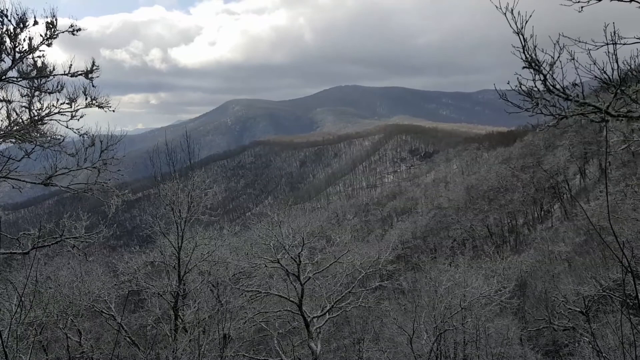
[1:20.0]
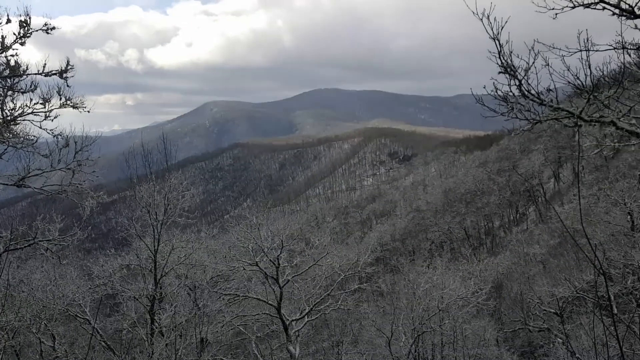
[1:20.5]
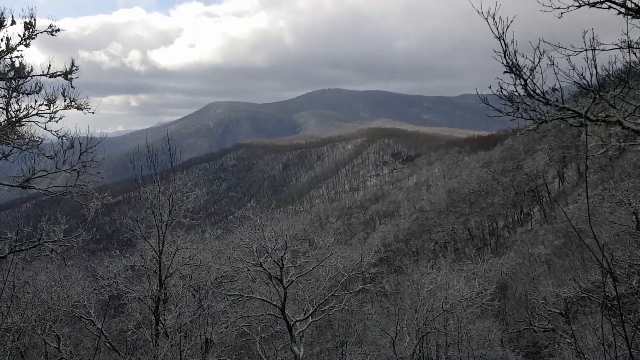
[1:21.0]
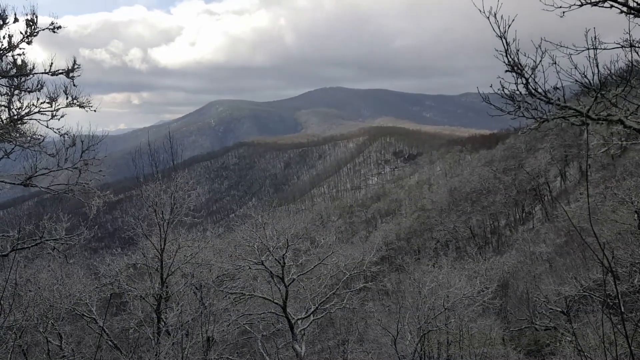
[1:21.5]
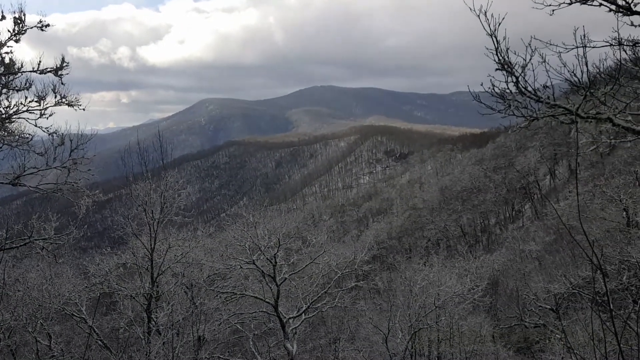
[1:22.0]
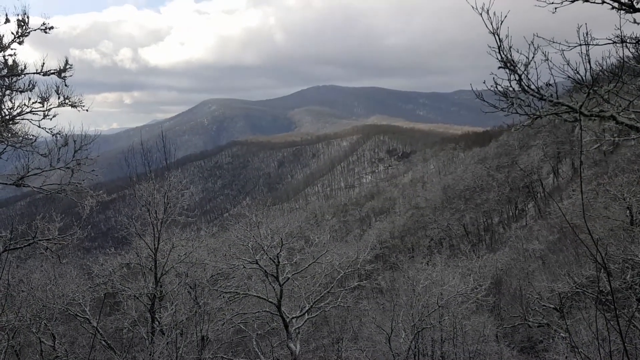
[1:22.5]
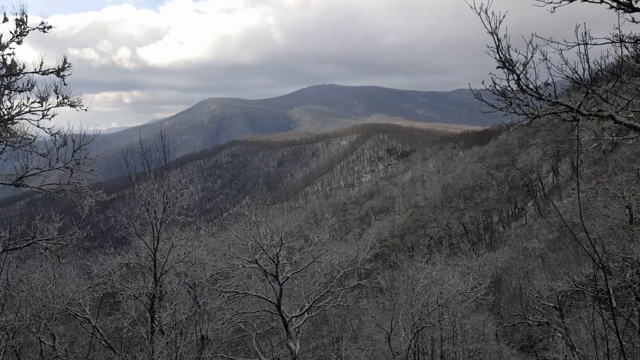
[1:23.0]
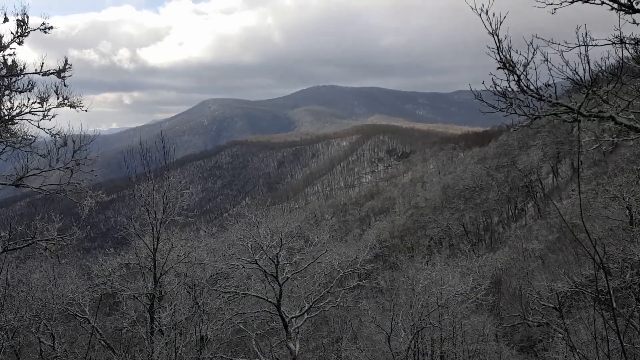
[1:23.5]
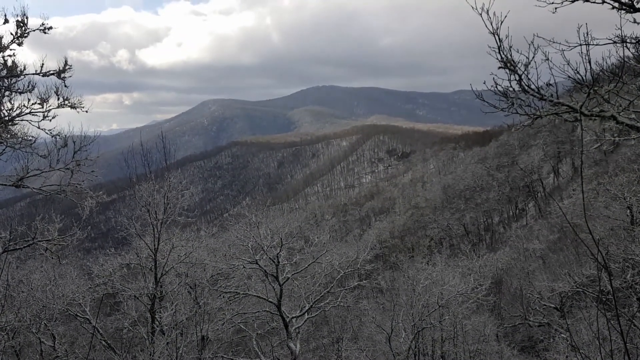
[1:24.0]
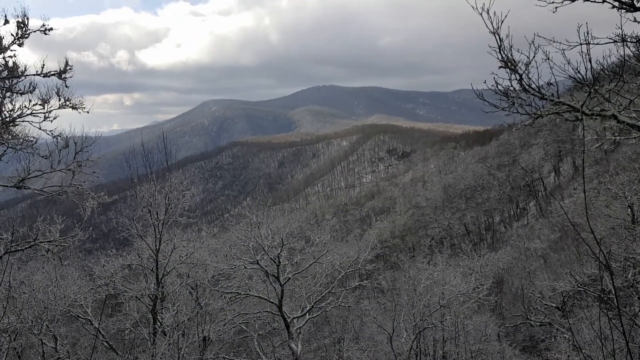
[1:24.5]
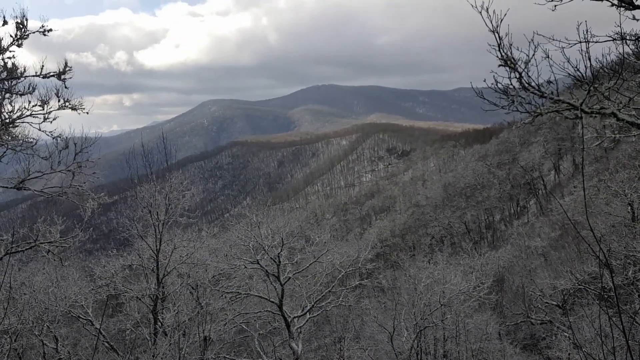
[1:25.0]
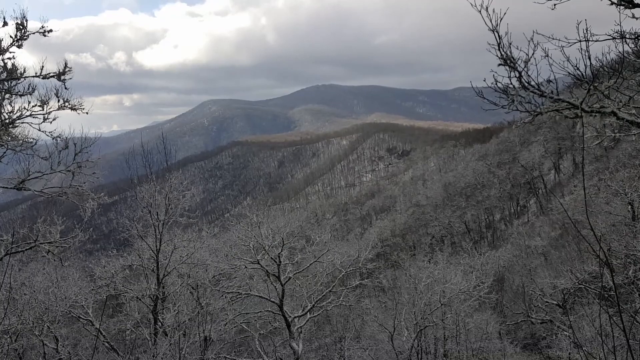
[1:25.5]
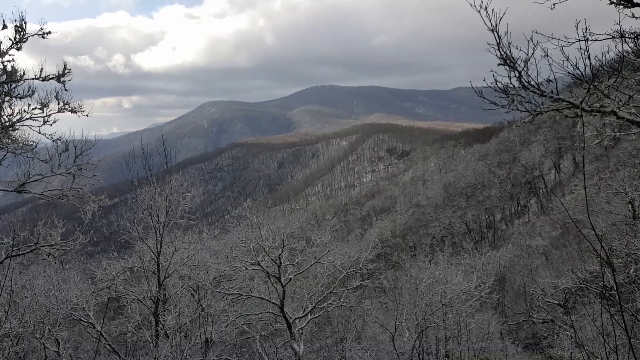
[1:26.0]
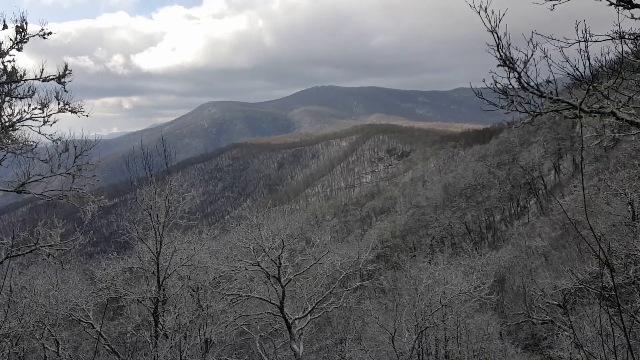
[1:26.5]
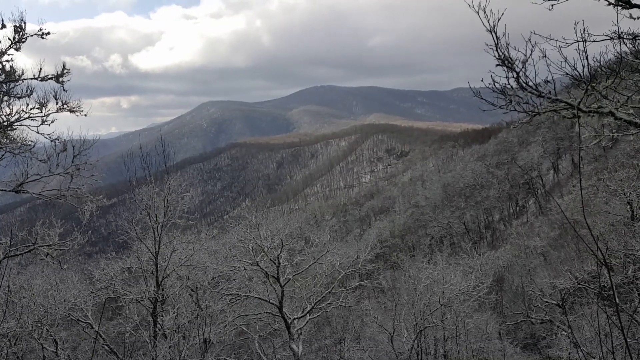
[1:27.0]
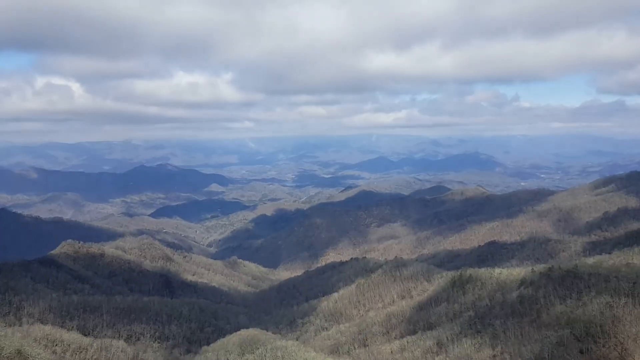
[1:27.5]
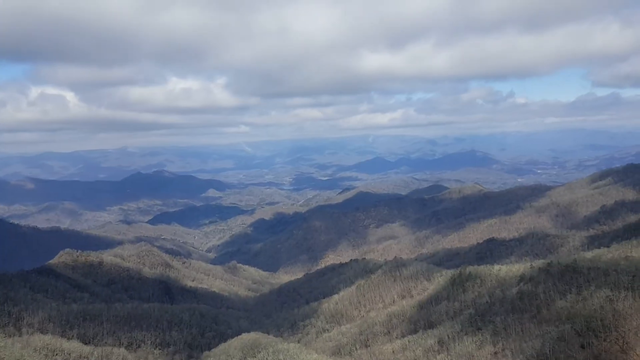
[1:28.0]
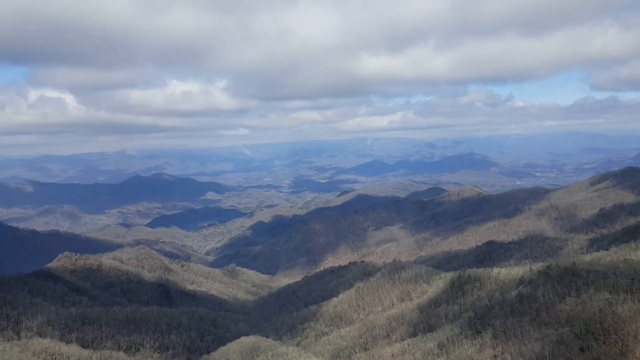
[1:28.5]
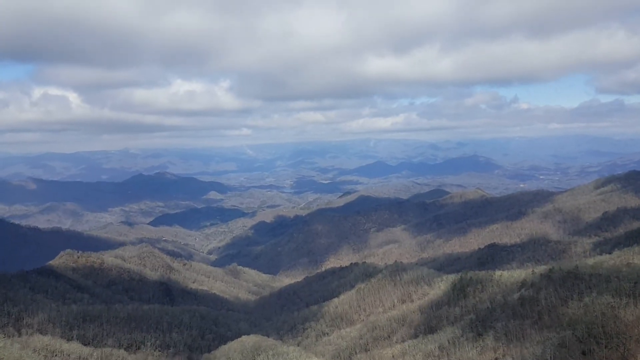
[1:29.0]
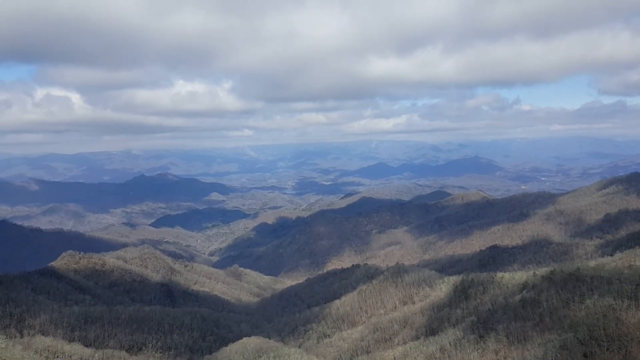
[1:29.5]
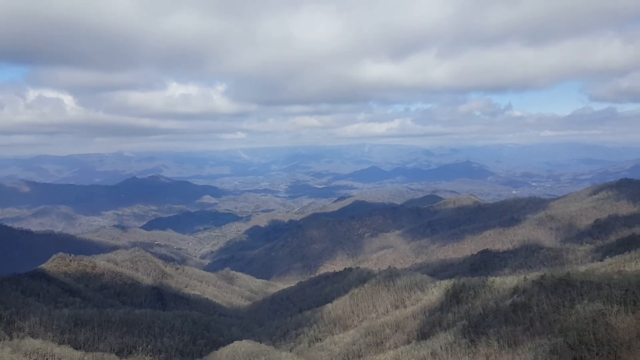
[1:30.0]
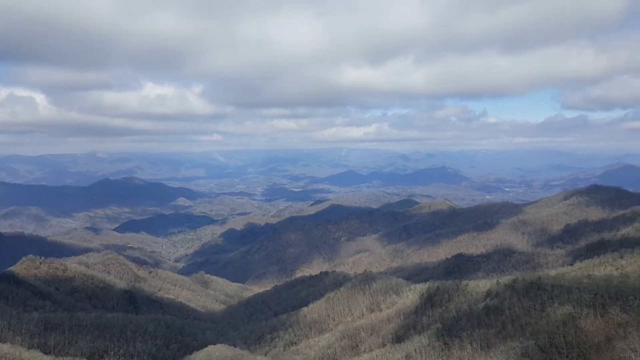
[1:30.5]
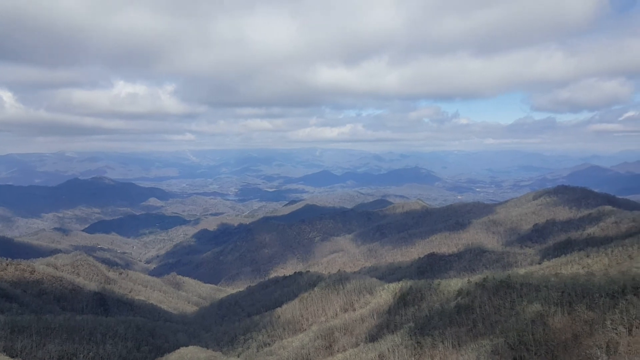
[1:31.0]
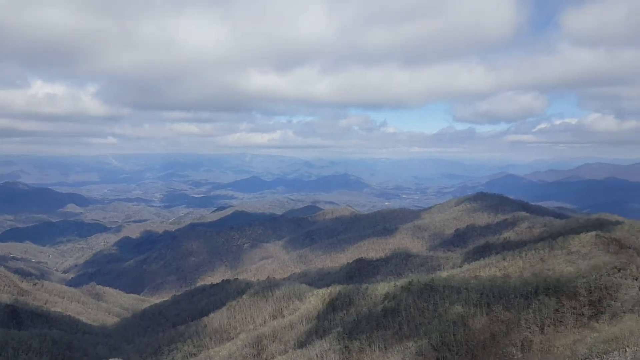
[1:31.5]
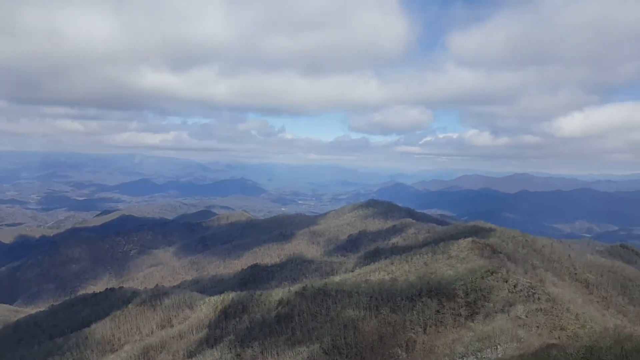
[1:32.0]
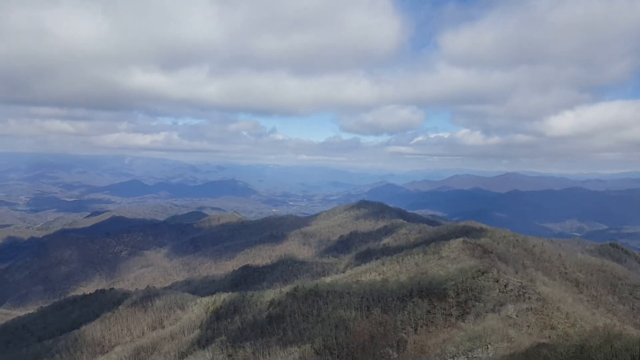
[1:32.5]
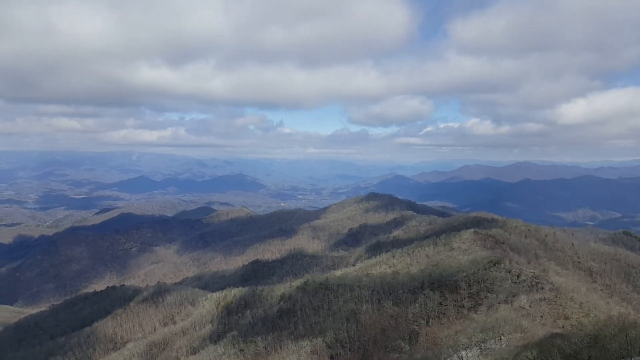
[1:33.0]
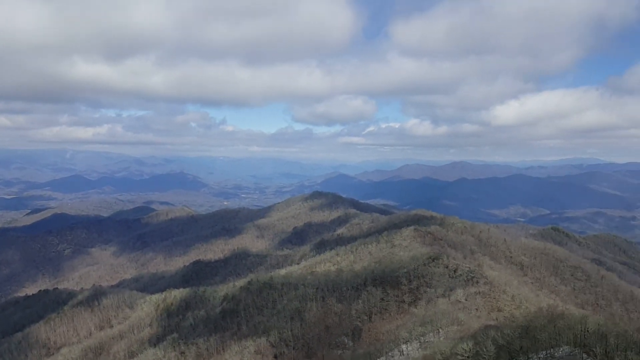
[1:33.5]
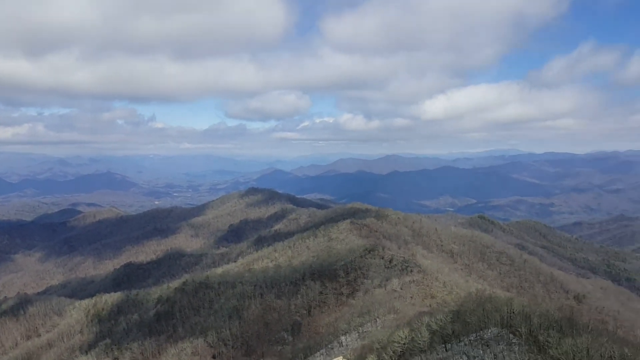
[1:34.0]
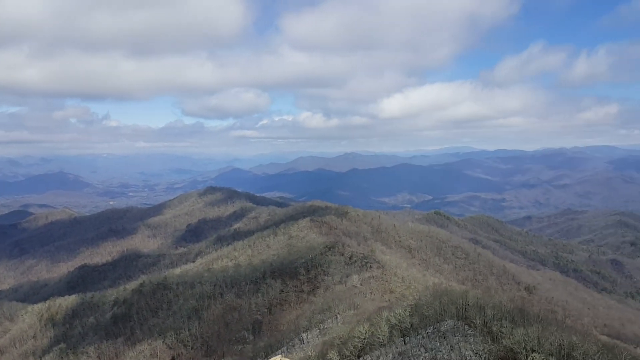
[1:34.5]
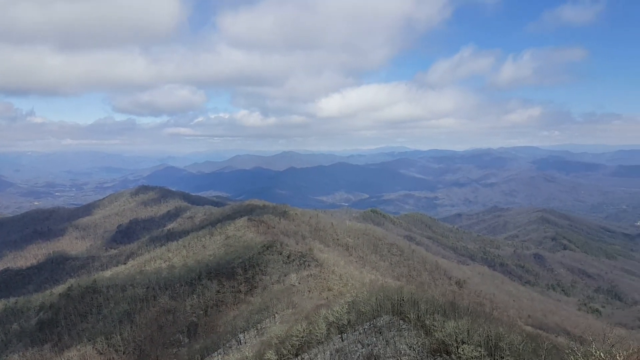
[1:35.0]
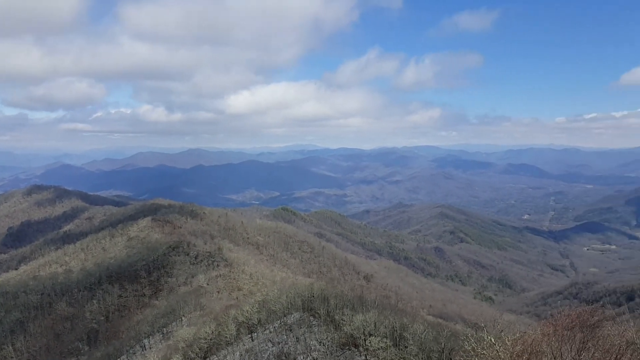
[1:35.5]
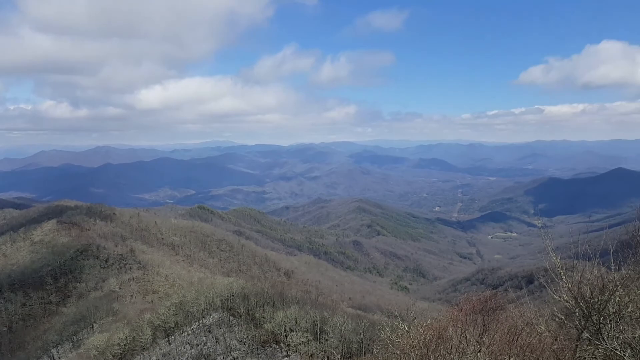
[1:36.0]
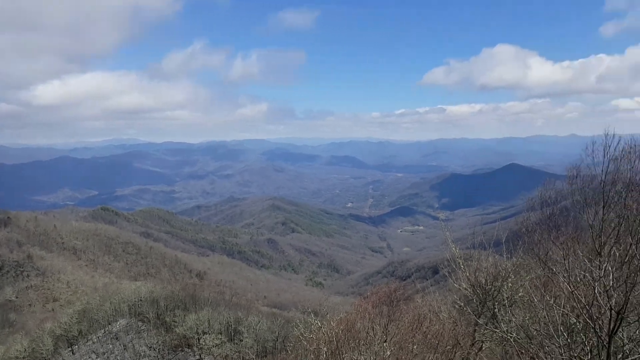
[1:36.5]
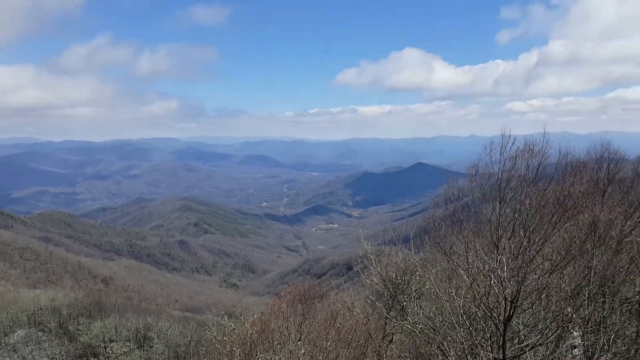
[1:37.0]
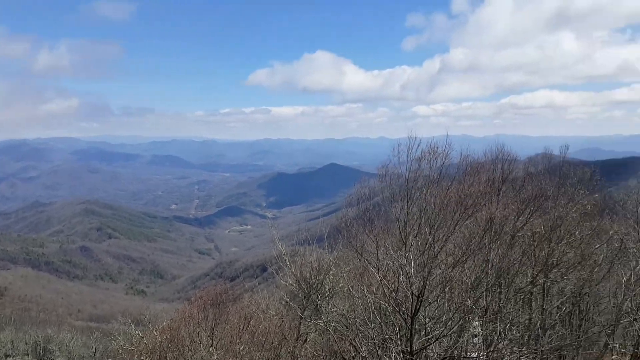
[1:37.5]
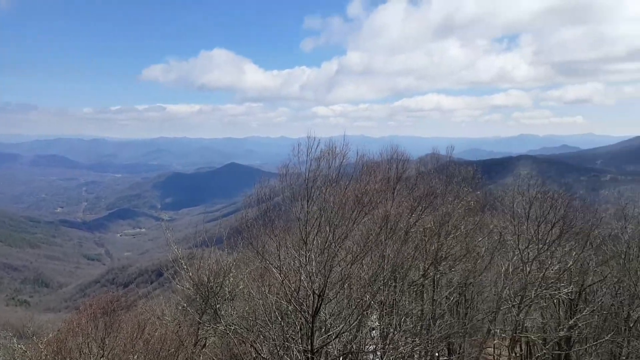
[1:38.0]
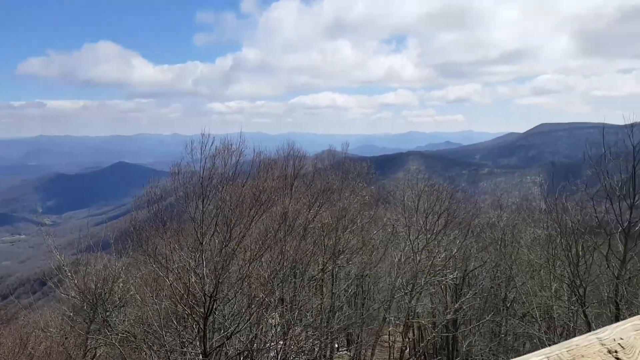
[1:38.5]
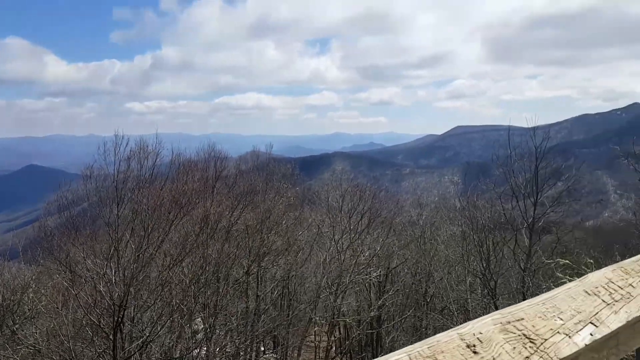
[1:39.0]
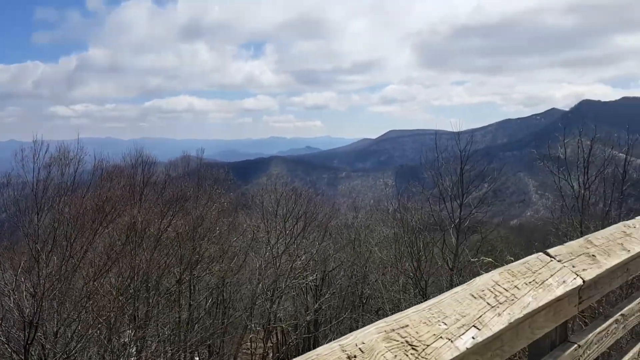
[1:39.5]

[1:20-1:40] Still on the top of the mountain, the camera pans around. The scene then switches to better weather with the sun out, at the very top of the mountain above the timberline; there are some trees, but not where the camera is. The person holding the camera is standing on some sort of wooden fence or gate, possibly a bridge or another man-made structure, high up in the mountains. Clouds and valleys are visible in the distance.